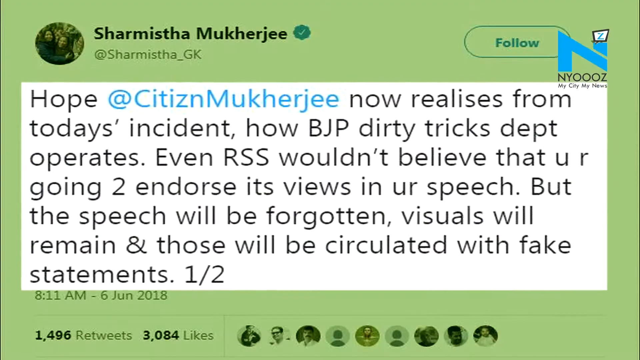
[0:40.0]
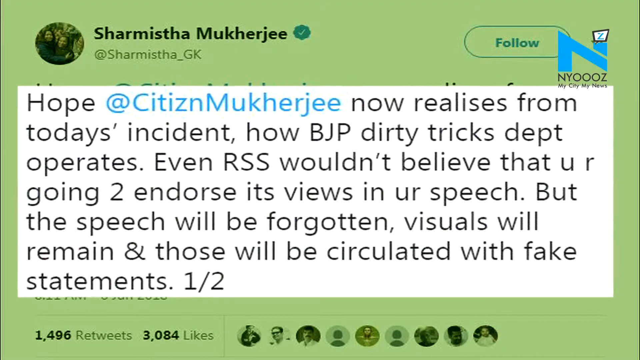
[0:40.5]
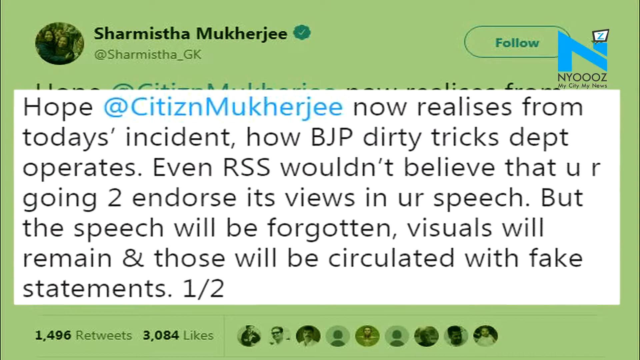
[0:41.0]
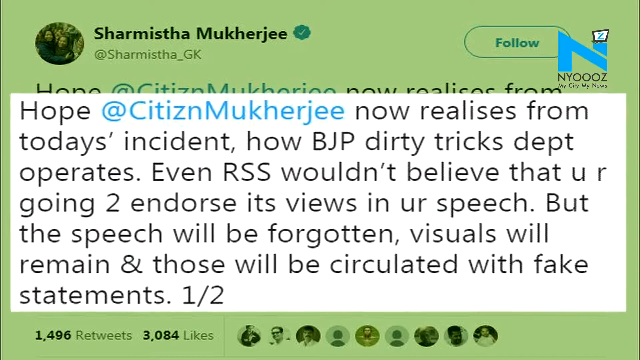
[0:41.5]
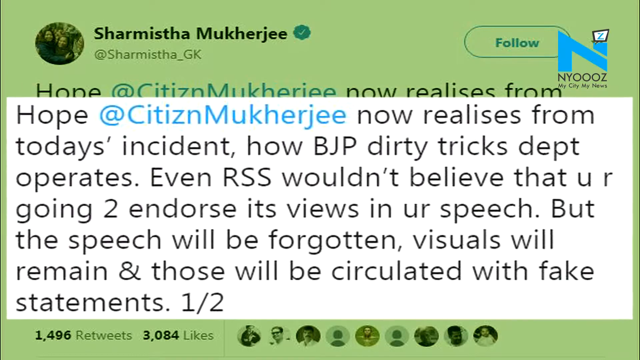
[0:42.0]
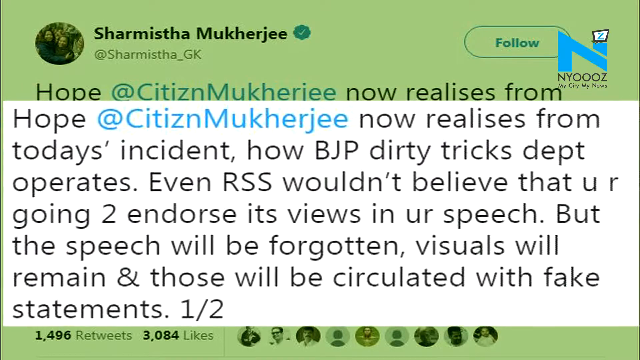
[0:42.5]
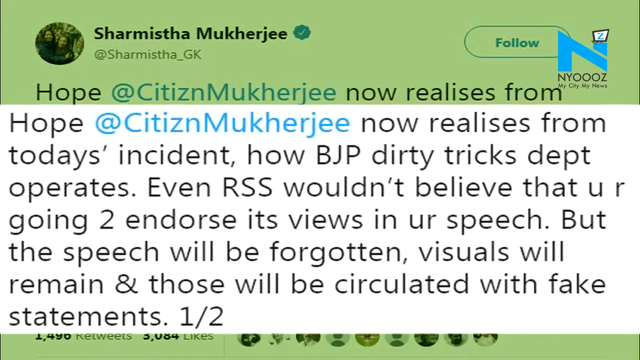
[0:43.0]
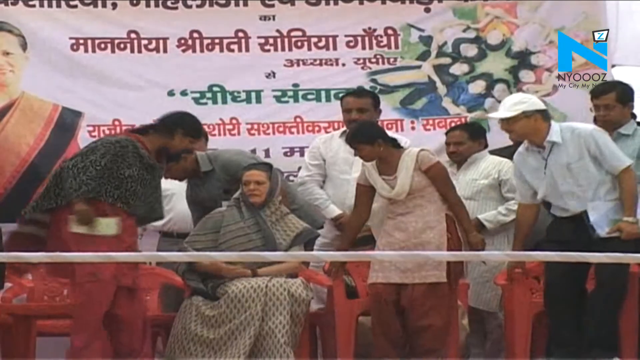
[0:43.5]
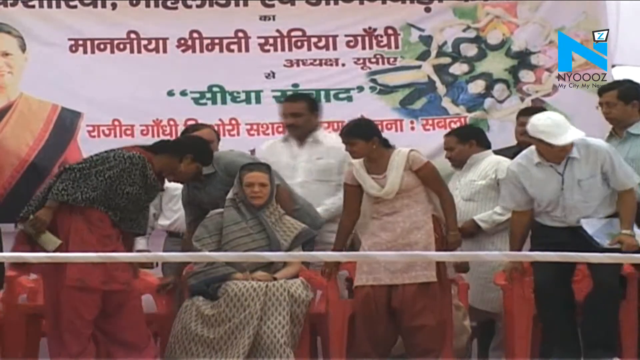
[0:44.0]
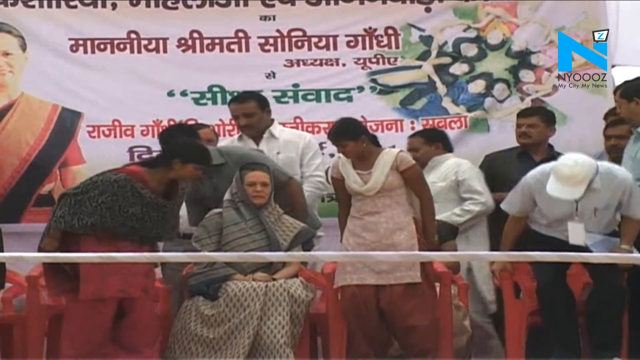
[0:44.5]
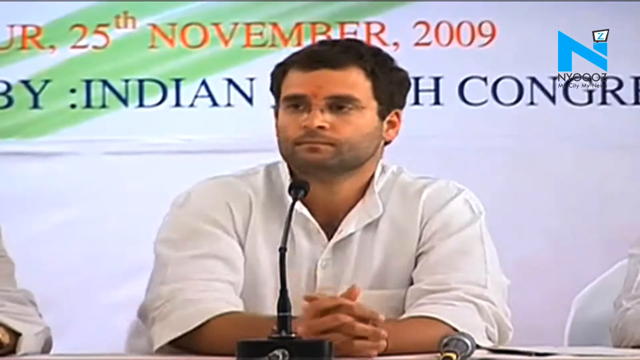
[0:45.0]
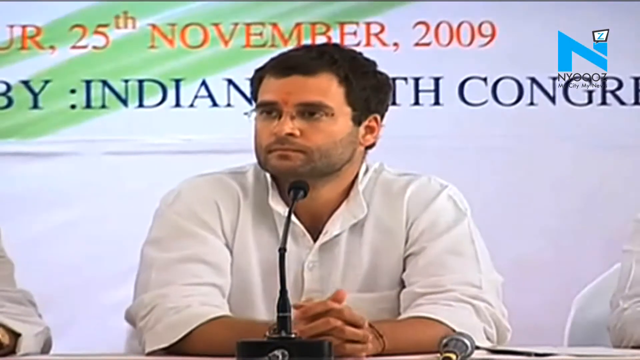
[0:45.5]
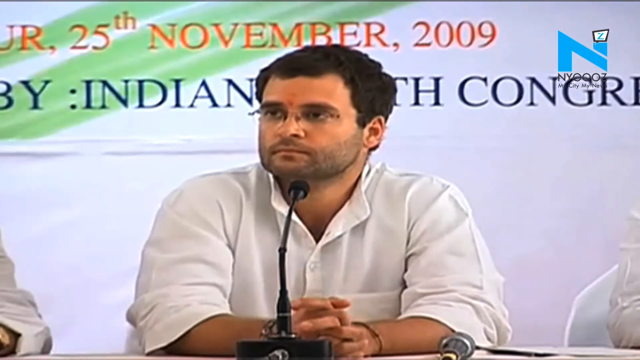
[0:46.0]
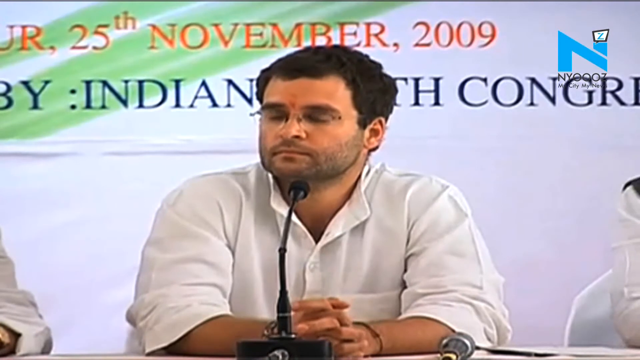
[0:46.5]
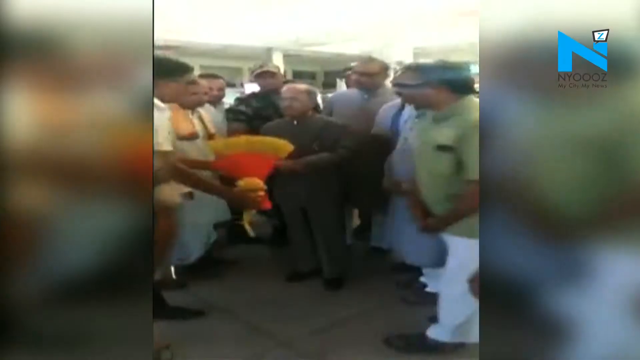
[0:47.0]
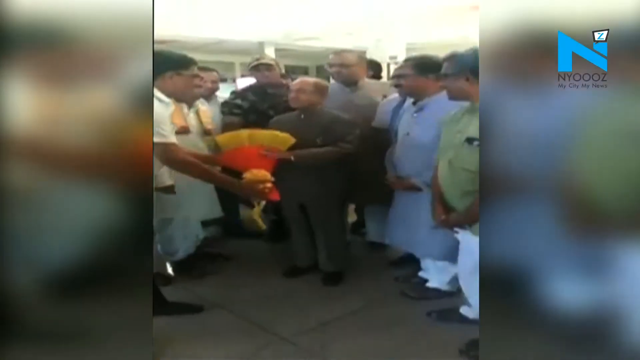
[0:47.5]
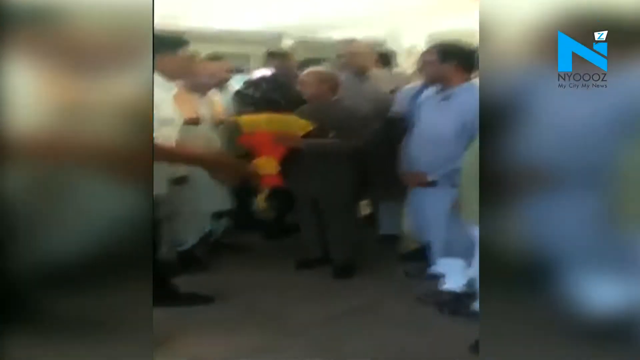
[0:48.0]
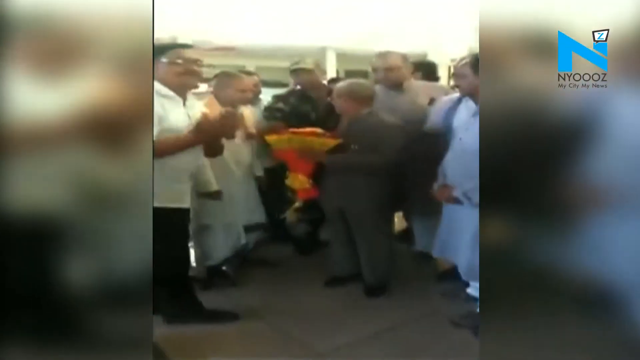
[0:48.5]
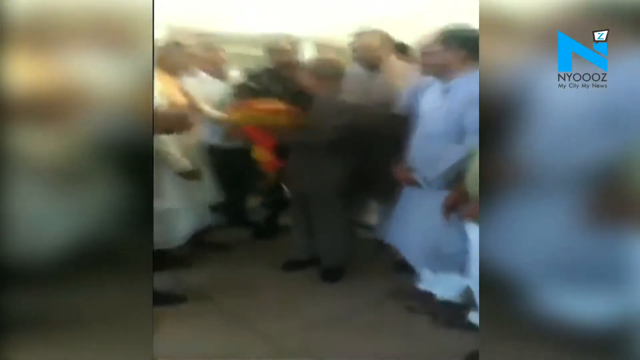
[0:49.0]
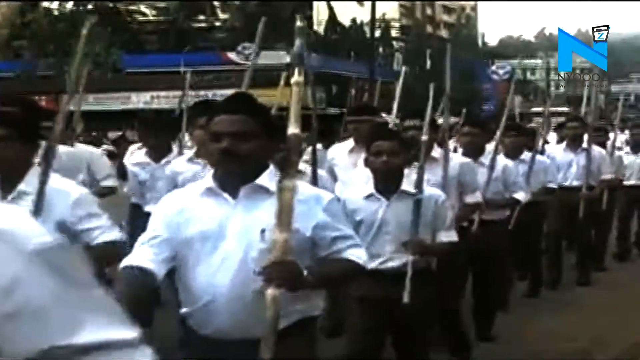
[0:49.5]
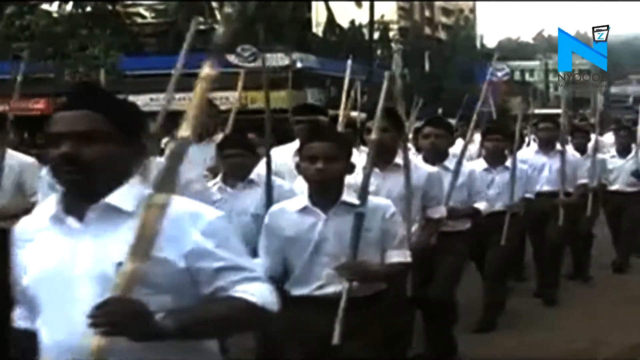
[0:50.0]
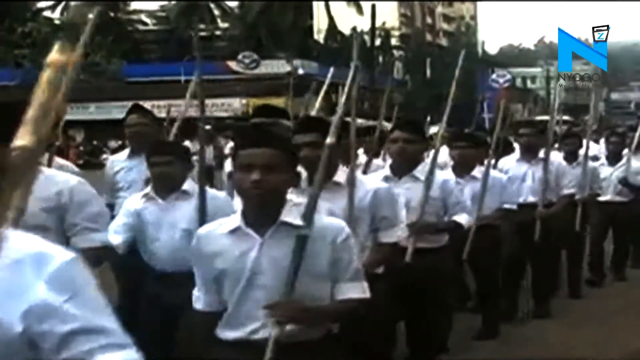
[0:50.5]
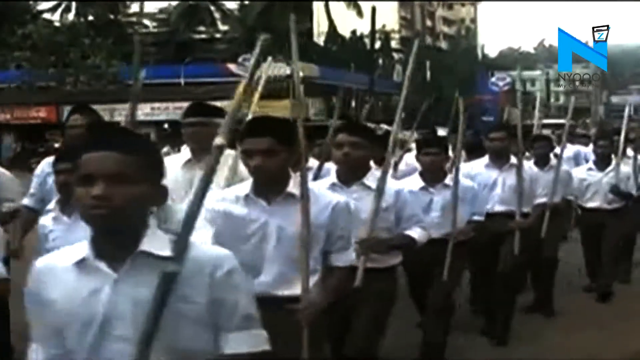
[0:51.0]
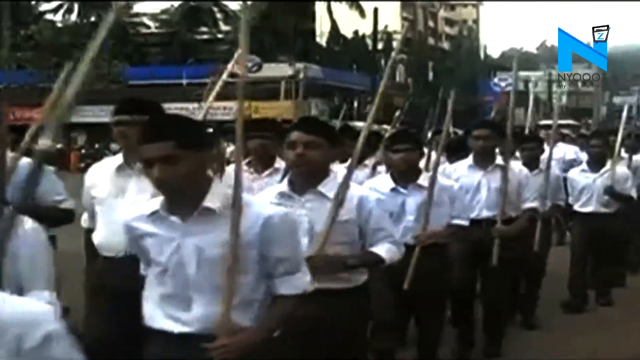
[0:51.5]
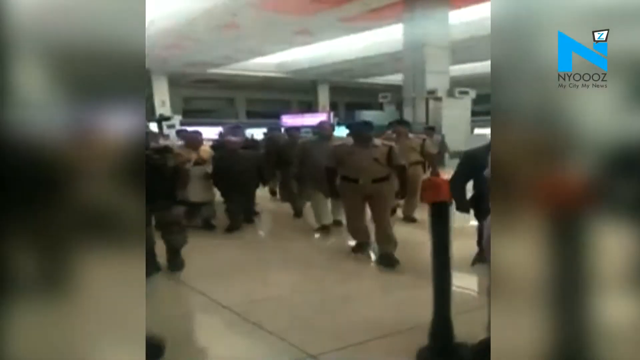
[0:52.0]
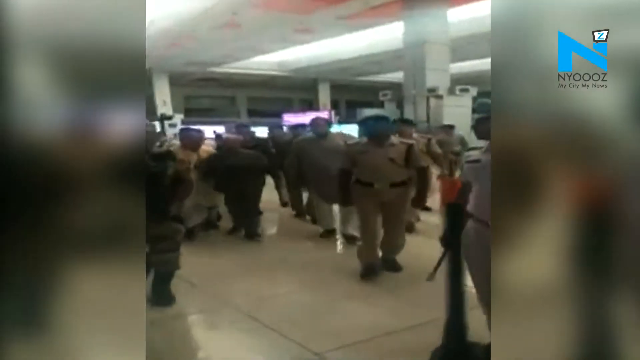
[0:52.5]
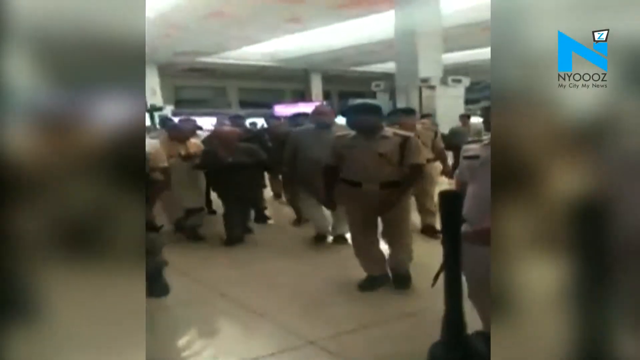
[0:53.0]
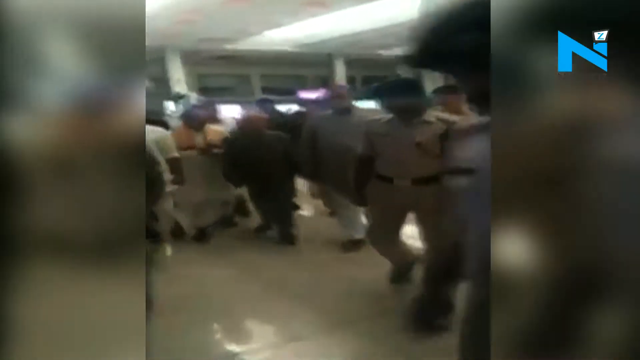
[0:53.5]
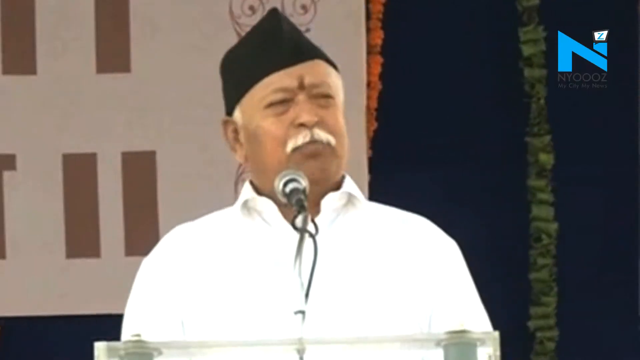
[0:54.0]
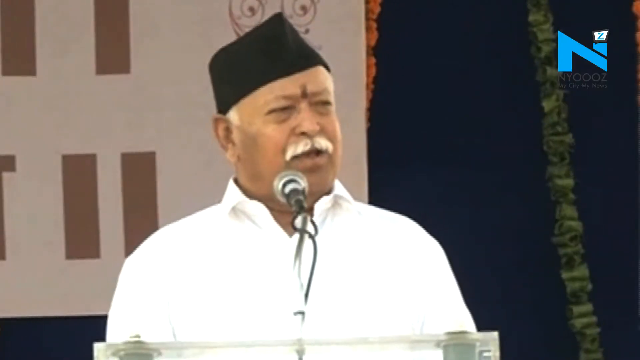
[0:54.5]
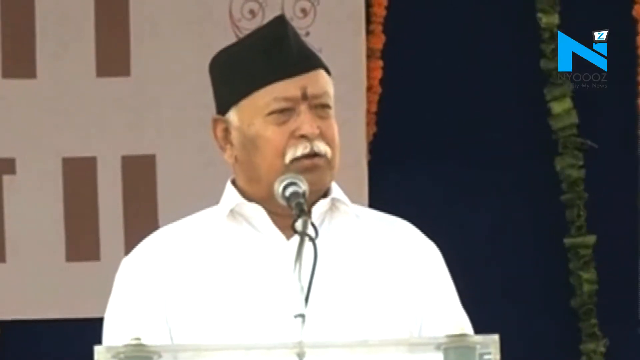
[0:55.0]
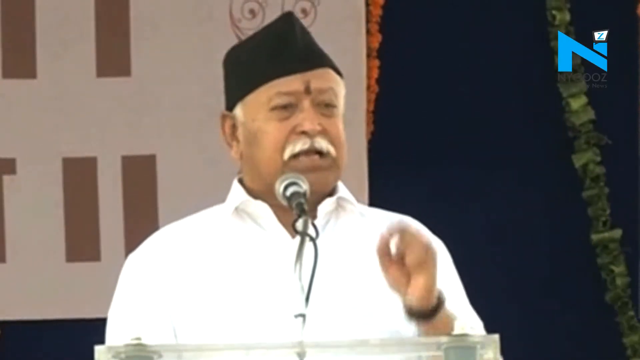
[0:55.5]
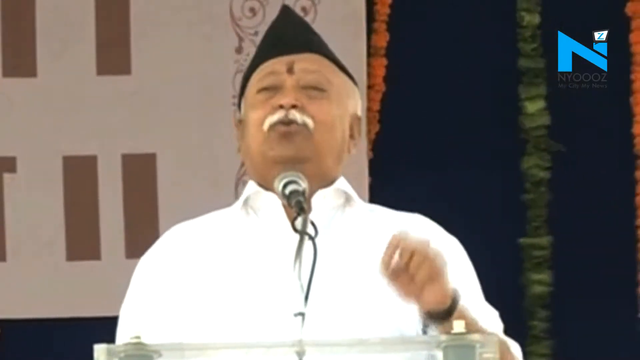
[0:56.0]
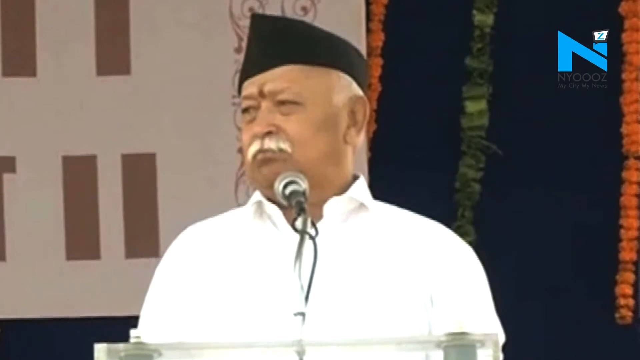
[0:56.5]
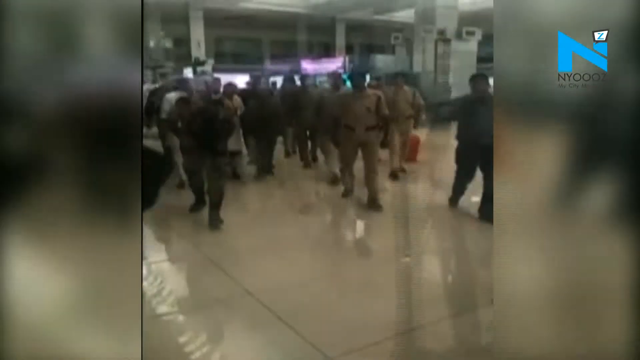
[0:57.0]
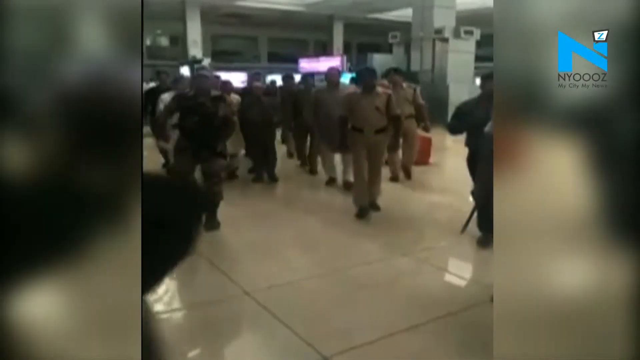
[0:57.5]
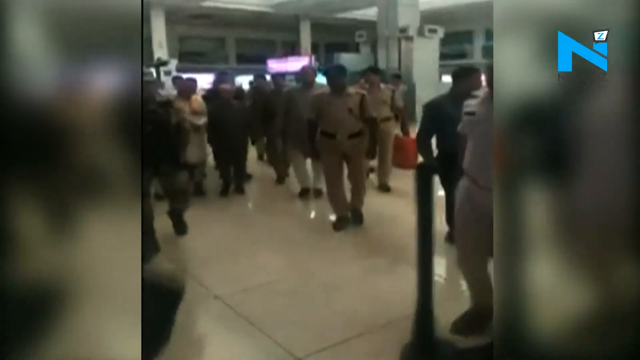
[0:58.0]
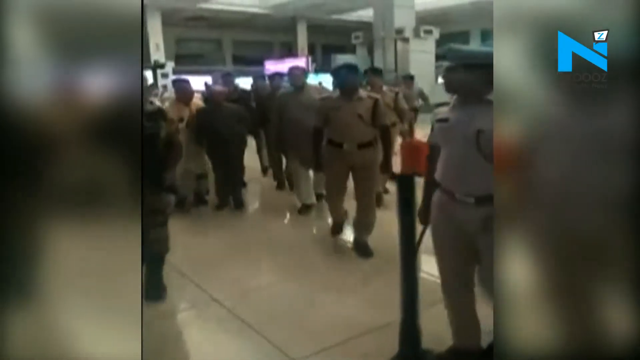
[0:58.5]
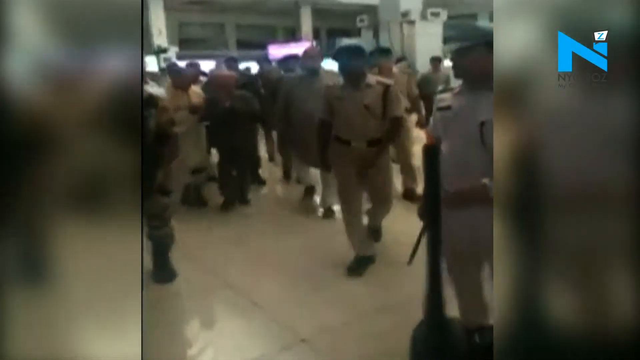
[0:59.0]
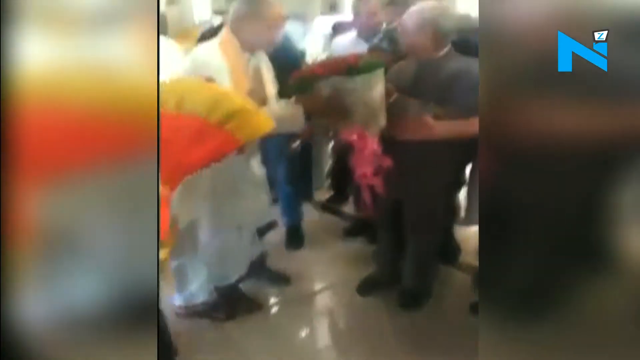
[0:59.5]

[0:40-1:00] A tweet by Sharmishta Mukherjee is on screen: "Hope @CitiznMukherjee now realises from todays' incident, how BJP dirty tricks dept operates. Even RSS wouldn't believe that u r going 2 endorse its views in ur speech. But the speech will be forgotten, visuals will remain & those will be circulated with fake statements." Next, a group of people sit in front of a white poster with Sanskrit writing on it; on the left side is an image of a woman, and in the right-hand corner is an image of people lying down in a circle. A man in a white shirt sits behind a microphone with a poster behind him; the writing on the poster is not clearly visible, but "25th November 2009" can be seen. An elderly man receives flowers, surrounded by a group of people. A large group of men walks on the streets, all holding sticks and wearing white shirts and black trousers. An elderly man in a white shirt and black hat stands behind a microphone, speaking.